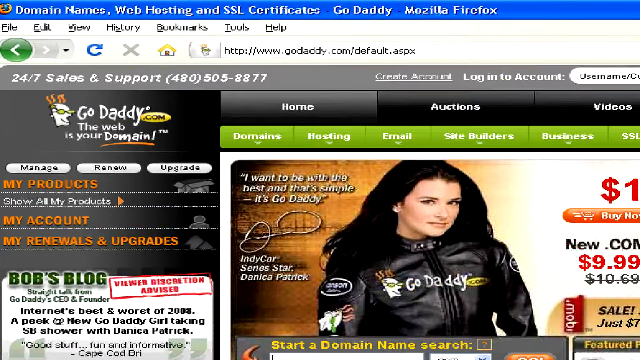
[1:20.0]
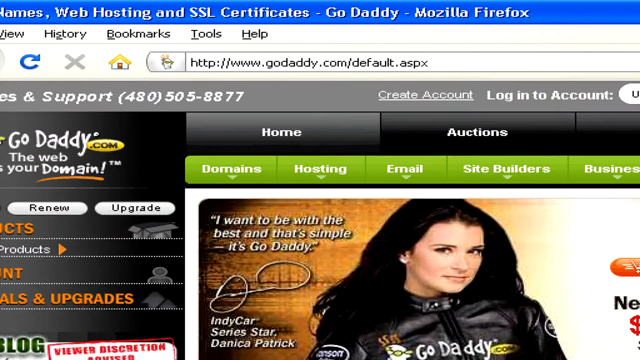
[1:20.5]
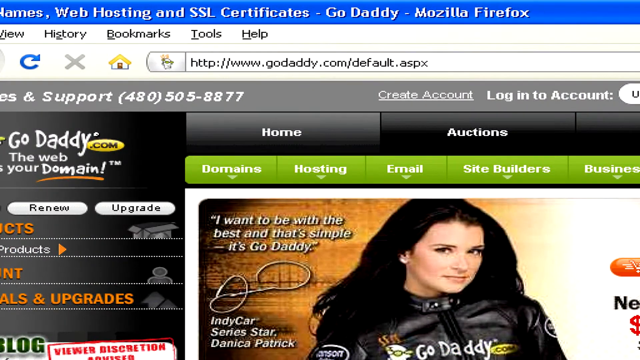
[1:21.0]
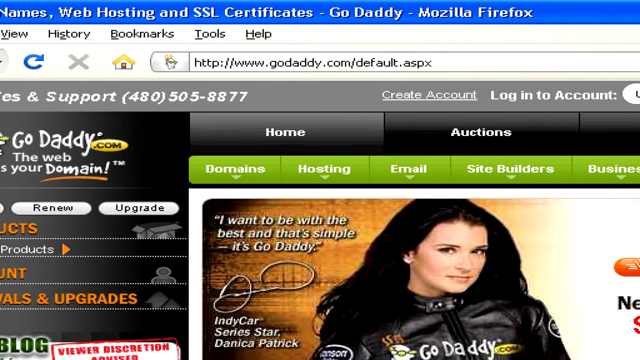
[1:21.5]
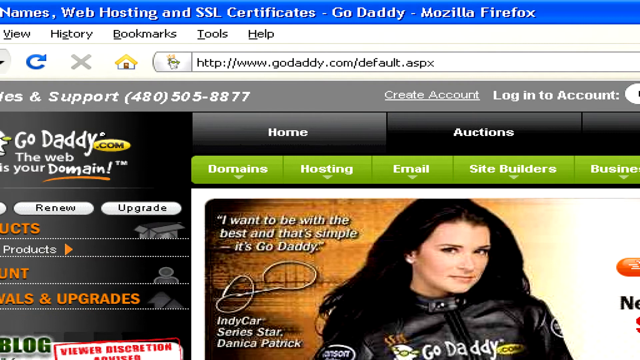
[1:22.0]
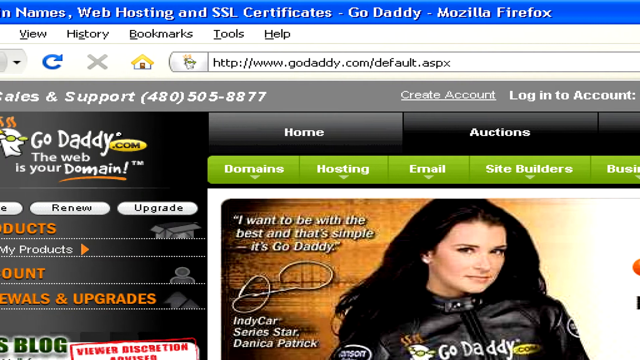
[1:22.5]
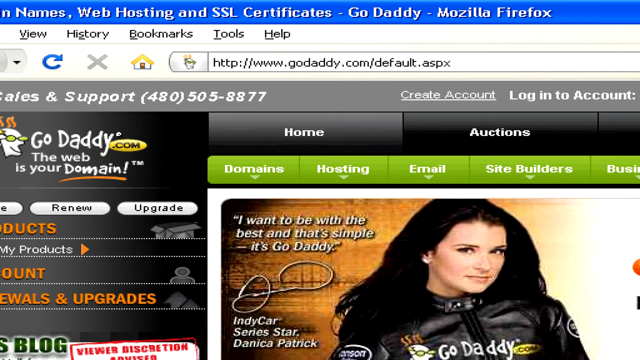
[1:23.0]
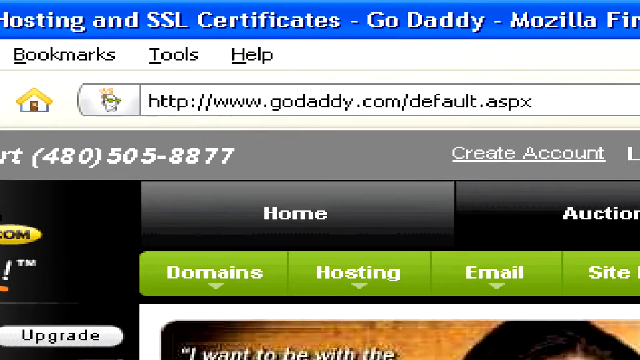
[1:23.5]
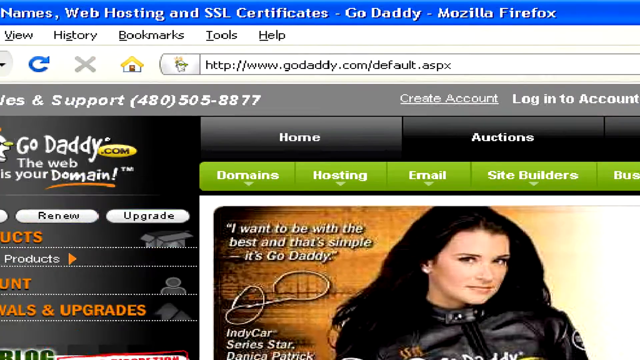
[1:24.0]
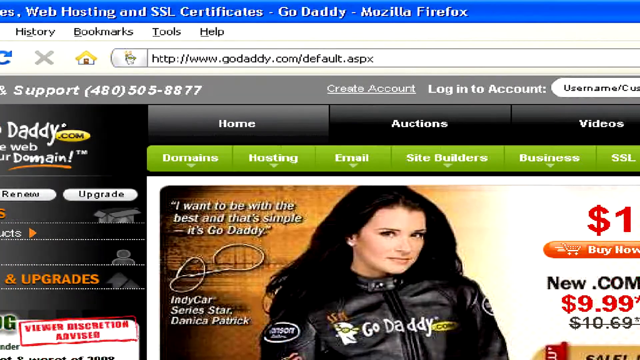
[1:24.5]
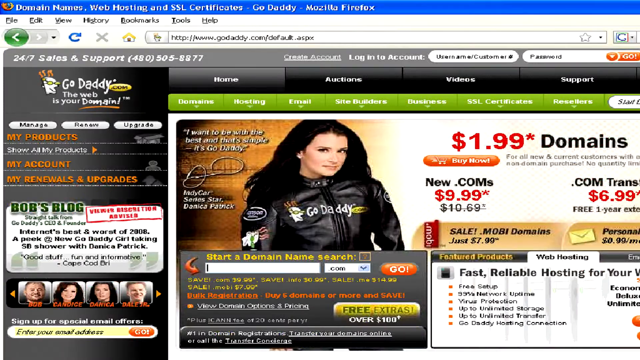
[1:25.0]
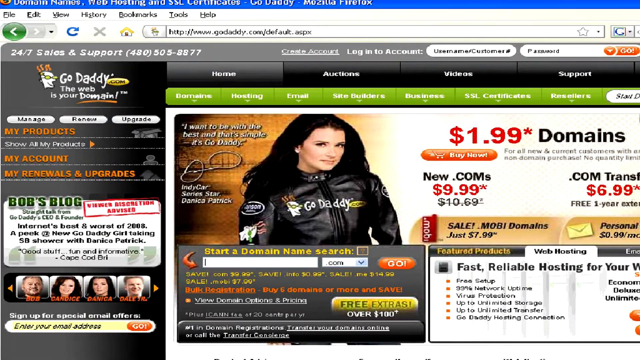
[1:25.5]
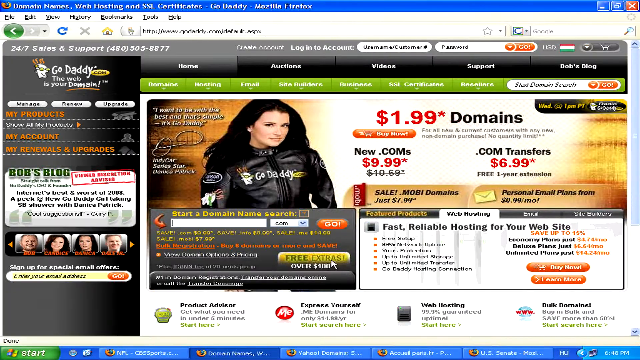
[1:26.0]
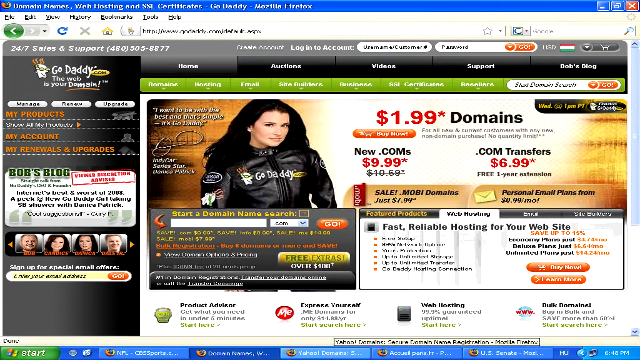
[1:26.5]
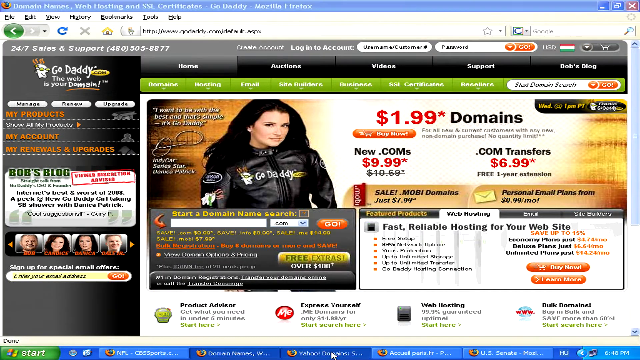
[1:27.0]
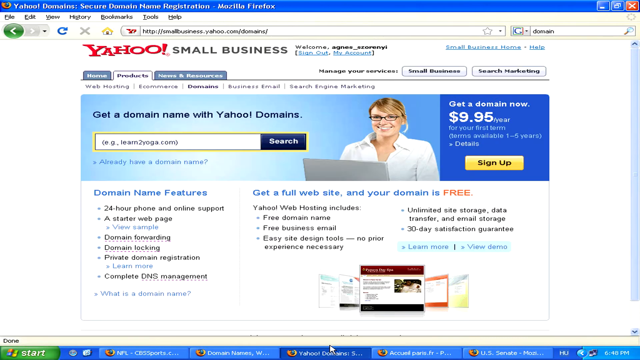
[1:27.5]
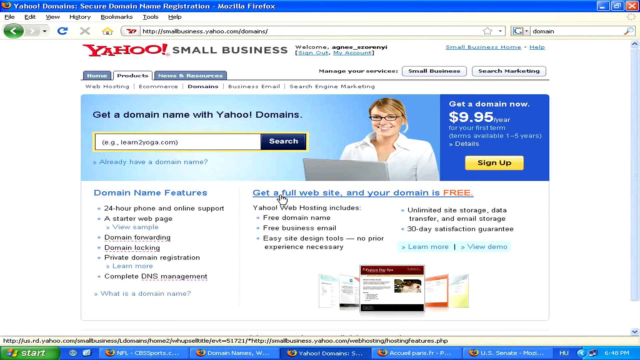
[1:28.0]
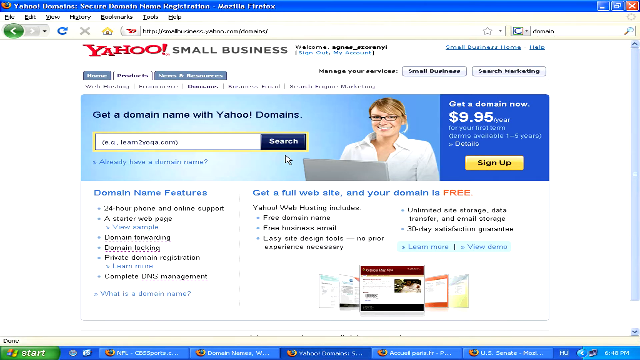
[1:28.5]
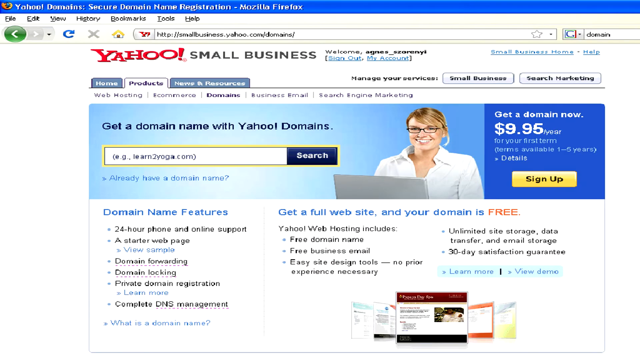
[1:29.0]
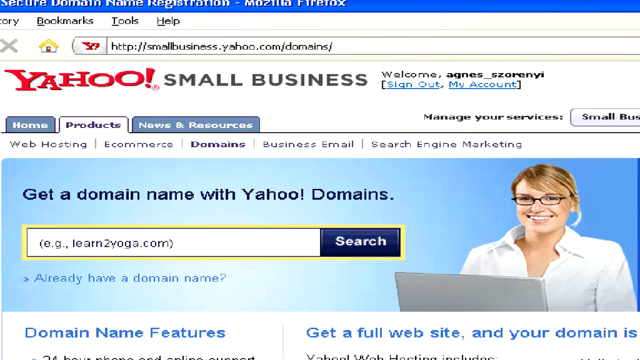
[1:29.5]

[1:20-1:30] The GoDaddy site has a lot going on. Underneath the URL, "sales and support" appears with a phone number over a gray banner, along with a "create account" hyperlink. Below that is a black banner with home and auctions, and below it are green drop-down boxes for domain, hosting and email. Underneath is something like a signature of Danica Patrick and text saying who she is. She has long, flowing jet-black hair and looks right at the viewer. The GoDaddy emblem is there, almost like a cartoon character with orange, kind of curly hair, a white face and glasses. Text reads "the web is your Domain", with Domain capitalized, a red or orange streak underneath it, and a trademark symbol. The view moves slightly left and right, and the scrolling is not smooth. It zooms in slightly on the URL, then zooms out. With the mouse pointer at the bottom of something, it goes to Yahoo small business, where the user is signed in as Agnese. At the top are two hyperlinks to sign out or go to the account. The view zooms in on what looks like a text field for searching Yahoo businesses.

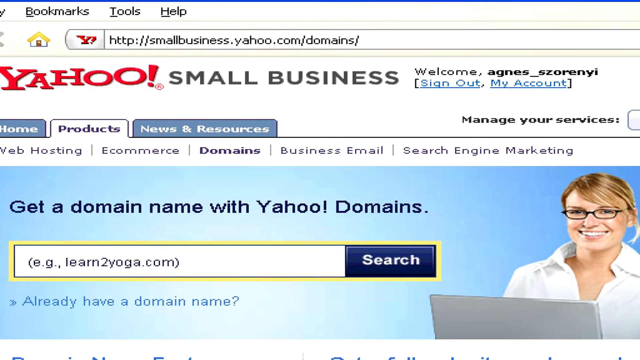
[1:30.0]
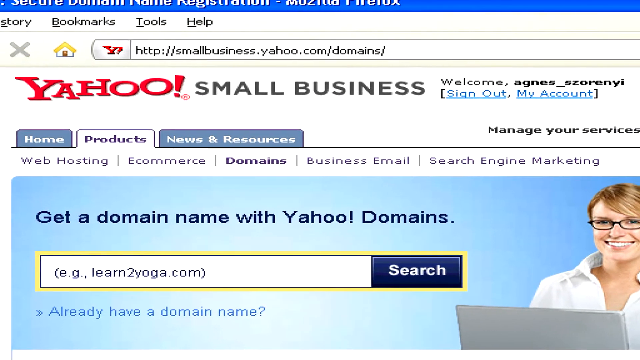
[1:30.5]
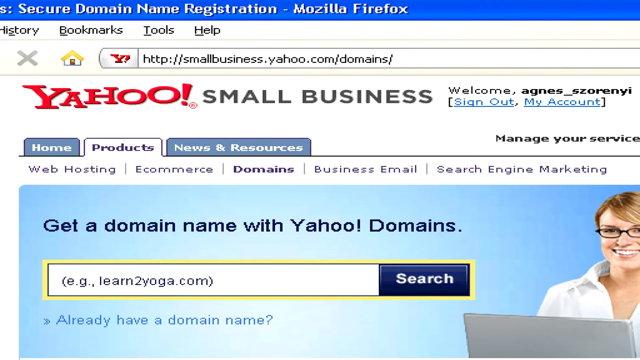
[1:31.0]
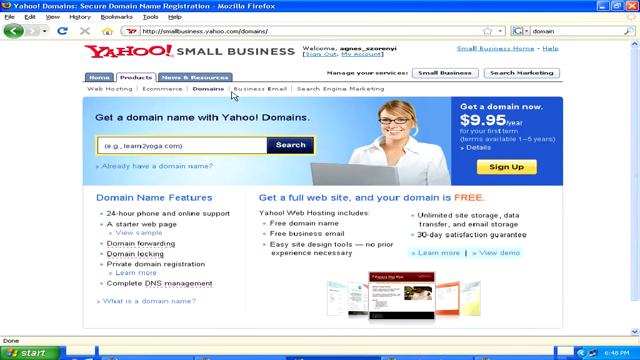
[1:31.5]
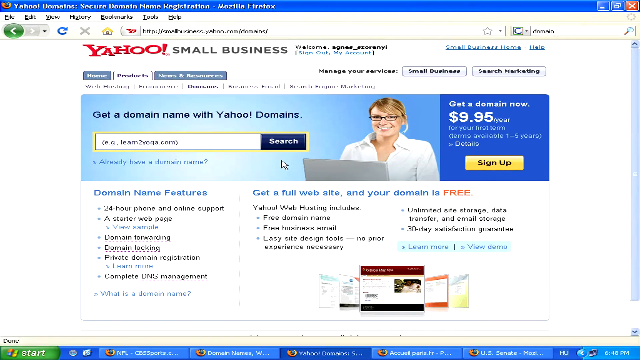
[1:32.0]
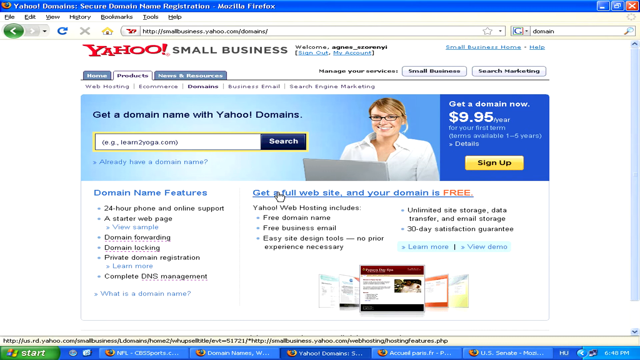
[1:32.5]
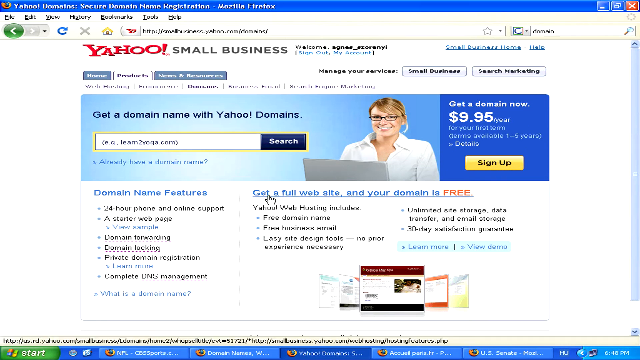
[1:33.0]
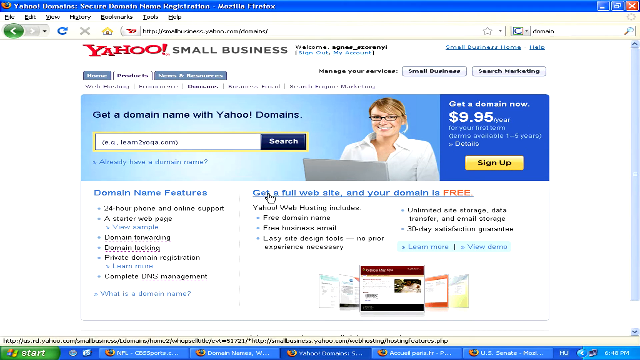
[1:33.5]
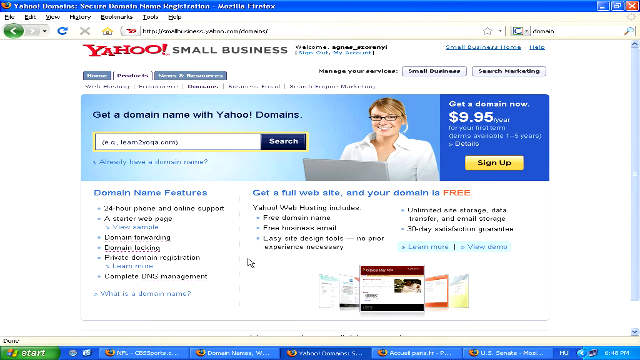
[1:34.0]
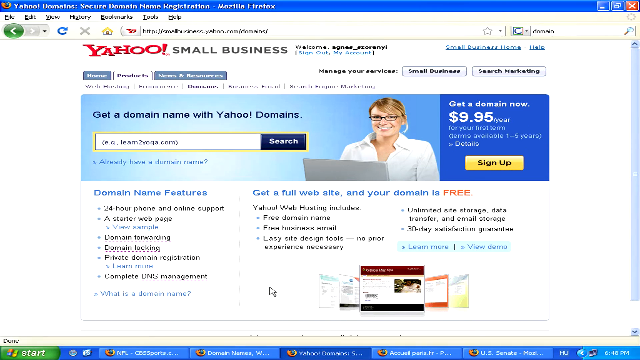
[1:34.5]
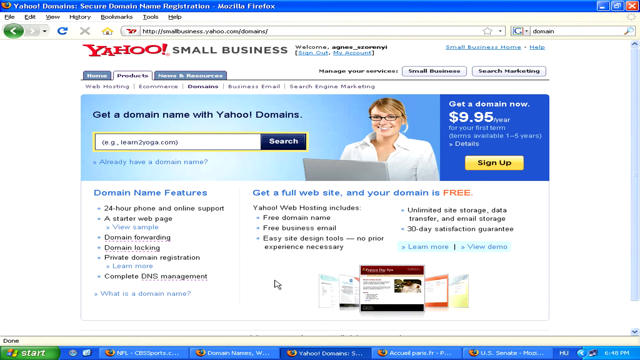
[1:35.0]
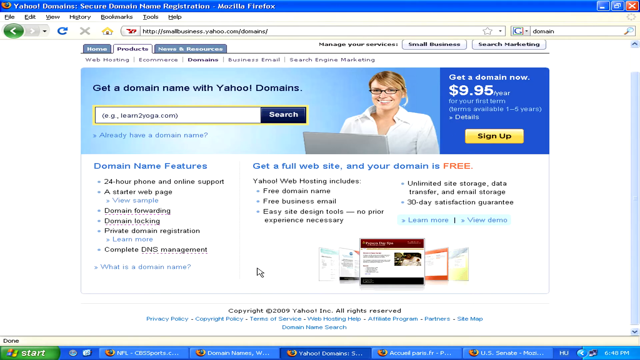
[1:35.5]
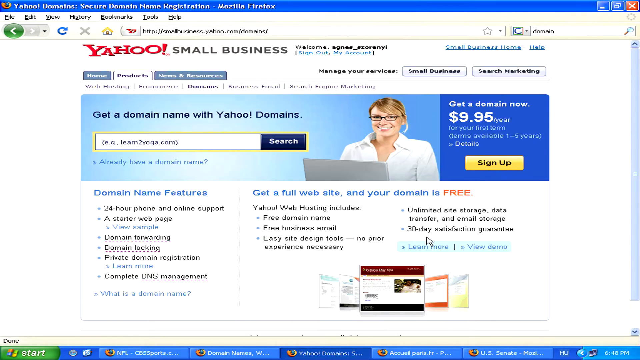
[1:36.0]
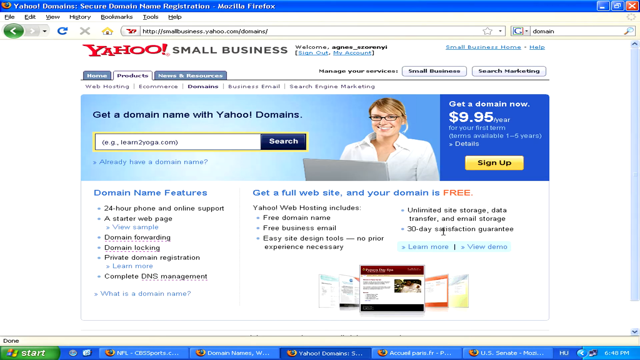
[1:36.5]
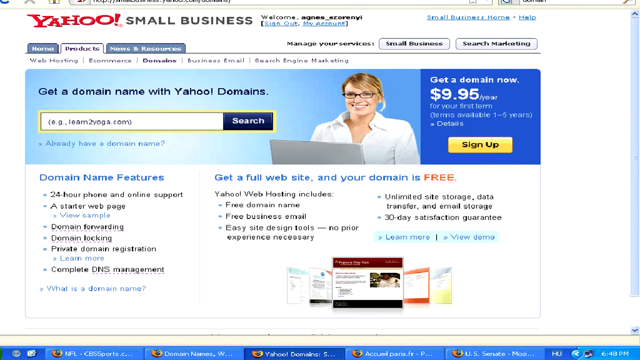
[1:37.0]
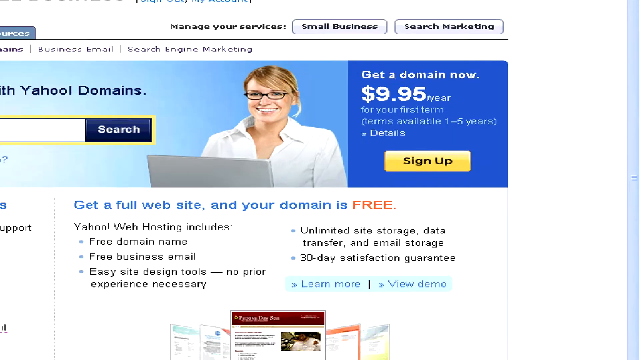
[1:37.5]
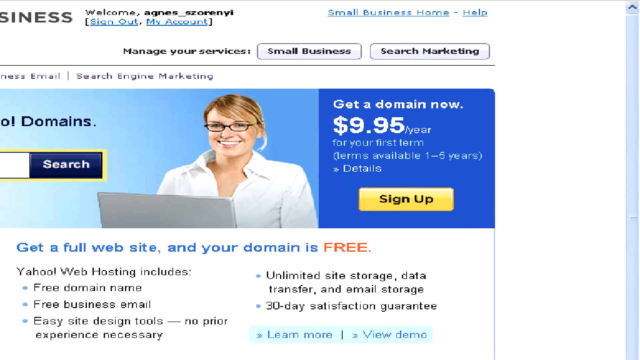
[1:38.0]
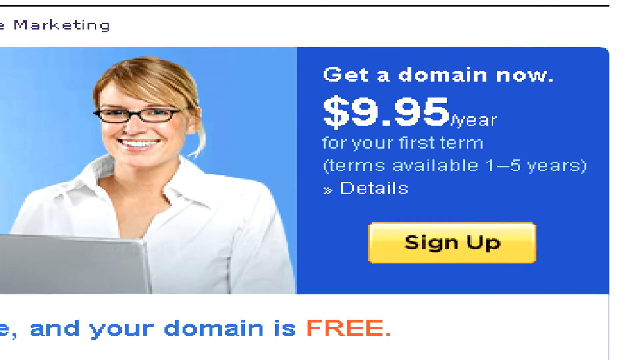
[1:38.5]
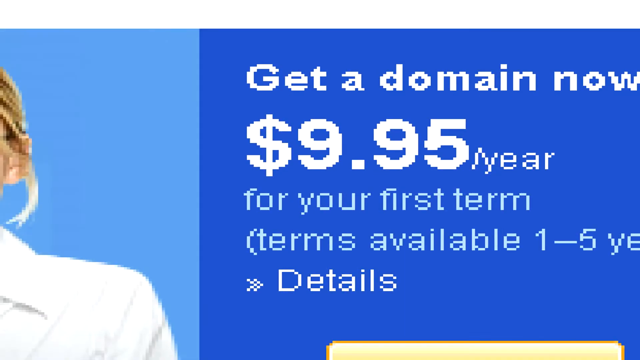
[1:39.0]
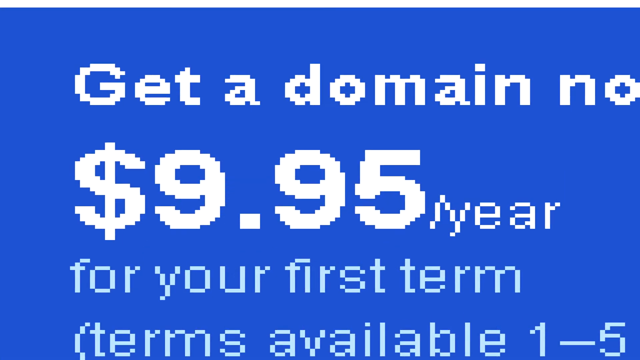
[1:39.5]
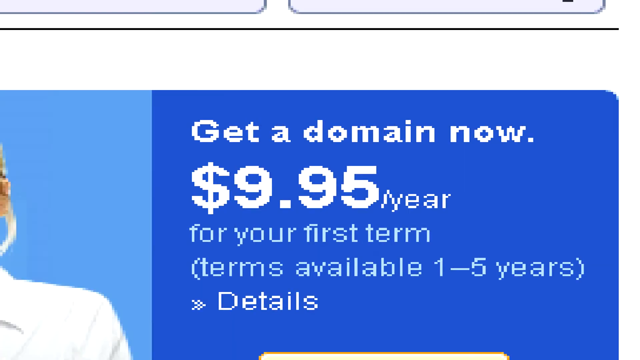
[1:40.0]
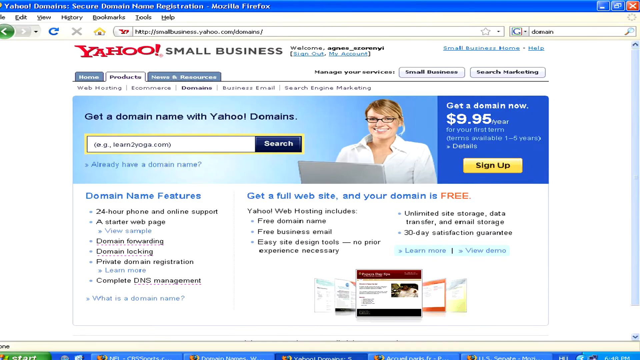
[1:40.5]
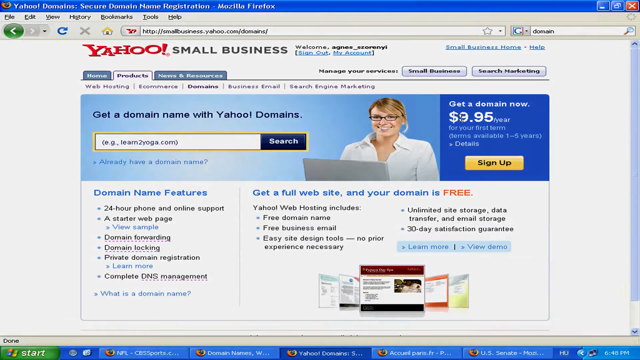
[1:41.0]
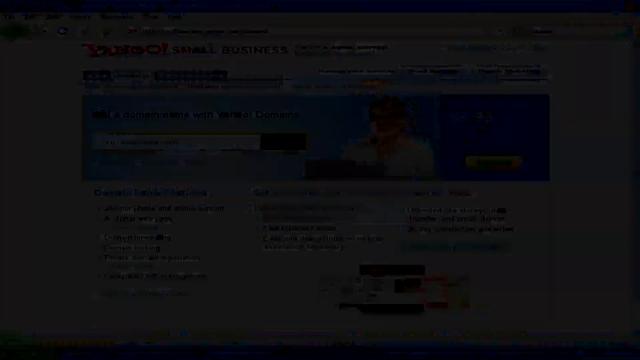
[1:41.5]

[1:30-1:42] Clicking and dragging moves the view toward the web address at the top left, and the history is visible as this happens. Right underneath is "Yahoo" in blue with a blue banner at the top. The current page is the products page; other tabs include home and resources, one of them a grayish-blue tab. The view scrolls down a little, and the mouse pointer goes to "Get a full website and your domain is free", which is in orange while everything else is blue. Hovering over it shows a little glow. The view scrolls down slightly, briefly showing some copyright information, then zooms in and moves up. A smiling woman wears a white long-sleeve button-up shirt, has her autumn brownish-blonde hair pulled back, and wears oval-shaped glasses. To the right, text reads "get a domain now 995/year", with the 995 very large, probably three times as big as the "year". There is a yellow "sign up" button underneath. The view zooms in a lot on this, making the "domain now" text and the price pixelated and very rough around the edges.